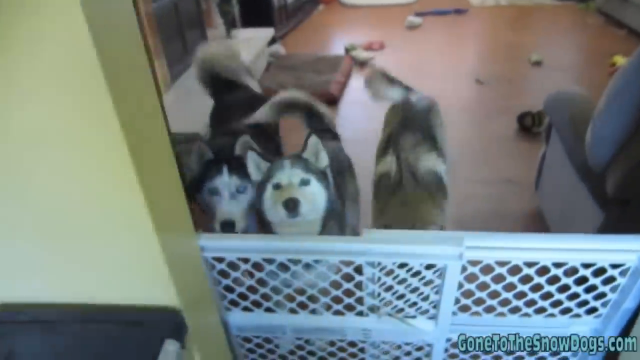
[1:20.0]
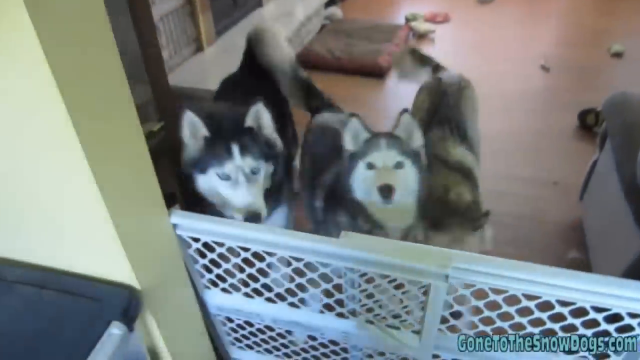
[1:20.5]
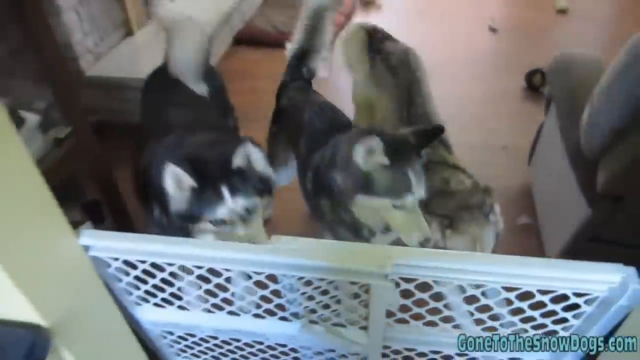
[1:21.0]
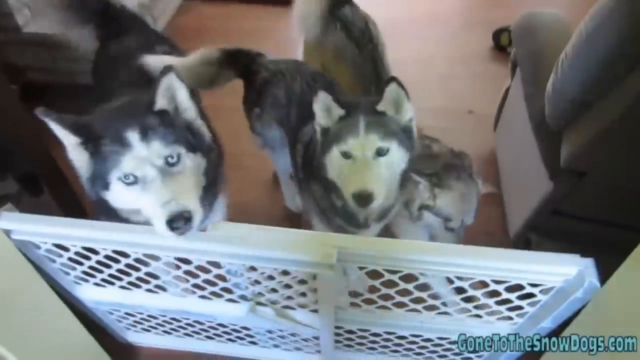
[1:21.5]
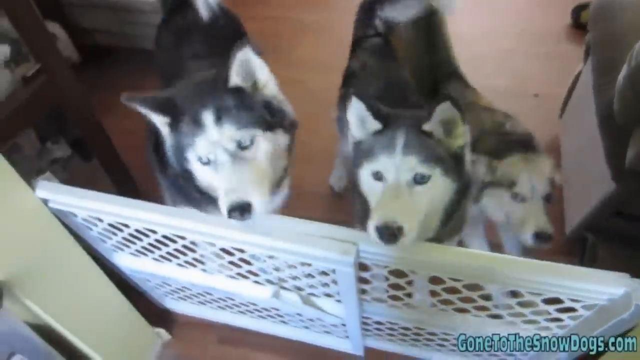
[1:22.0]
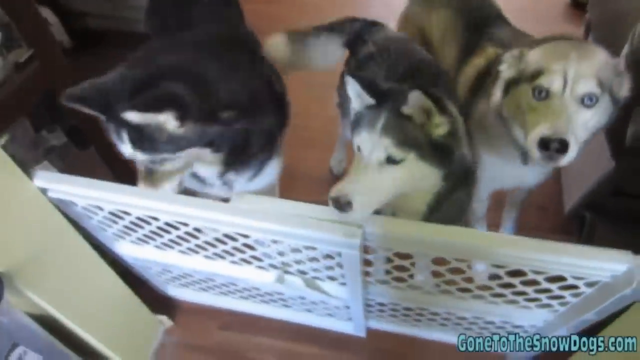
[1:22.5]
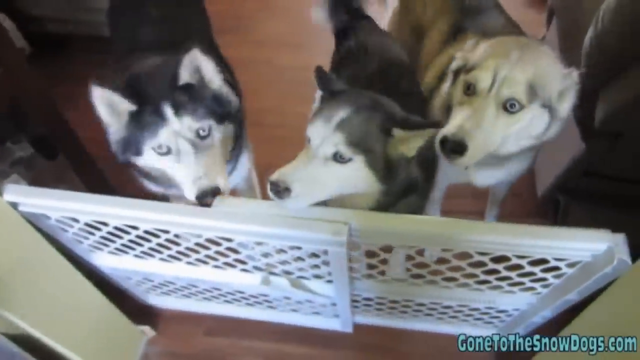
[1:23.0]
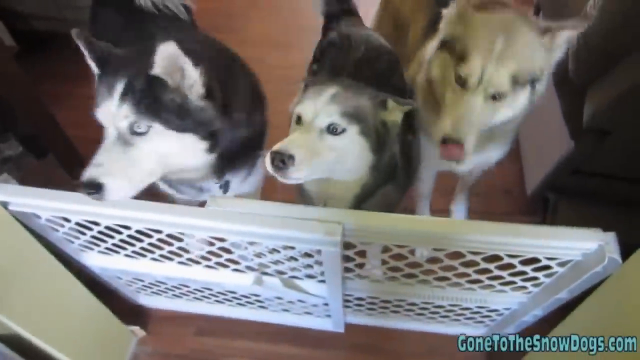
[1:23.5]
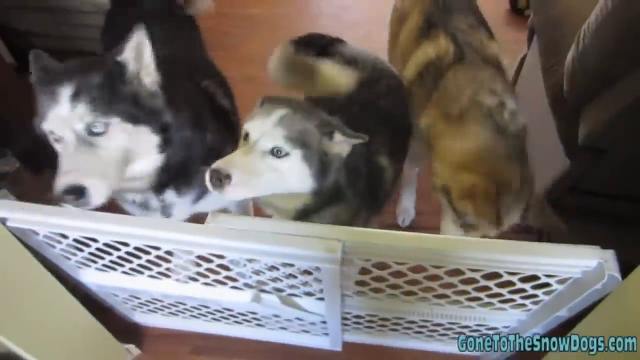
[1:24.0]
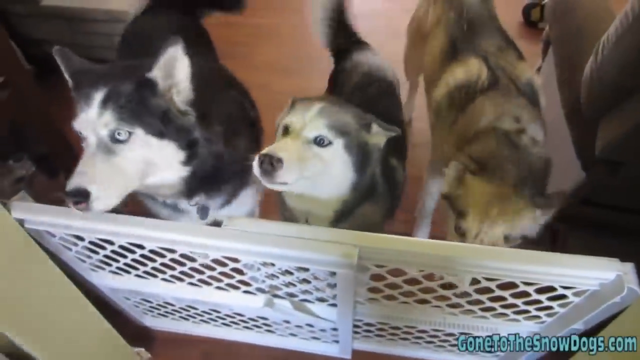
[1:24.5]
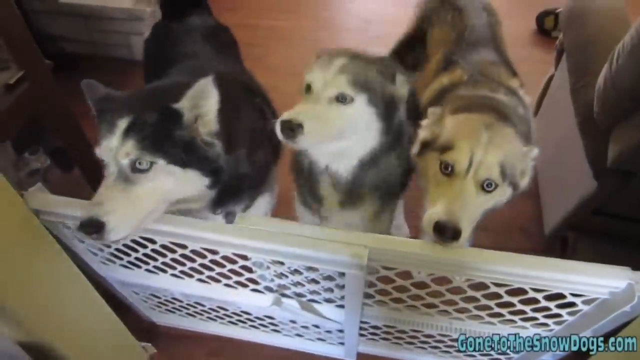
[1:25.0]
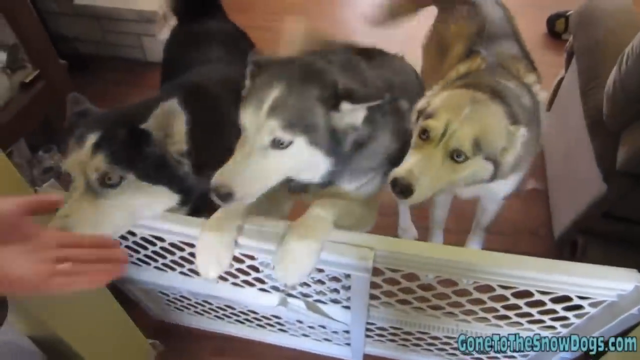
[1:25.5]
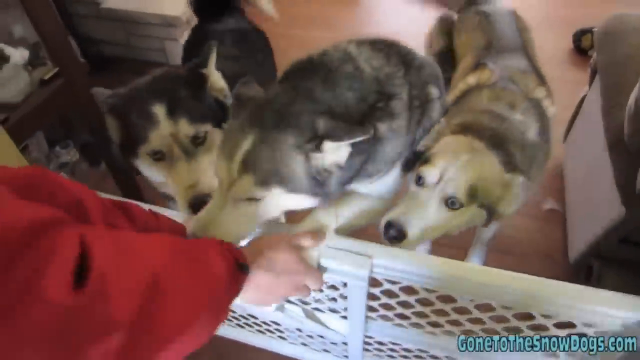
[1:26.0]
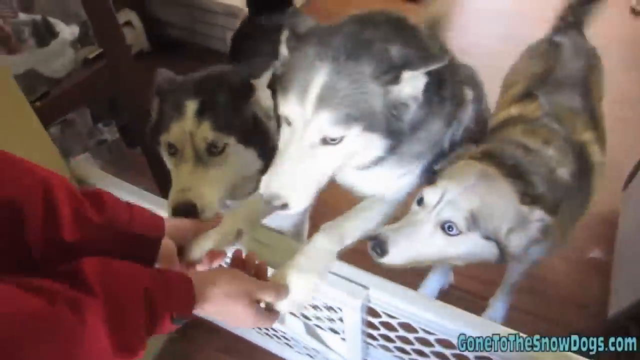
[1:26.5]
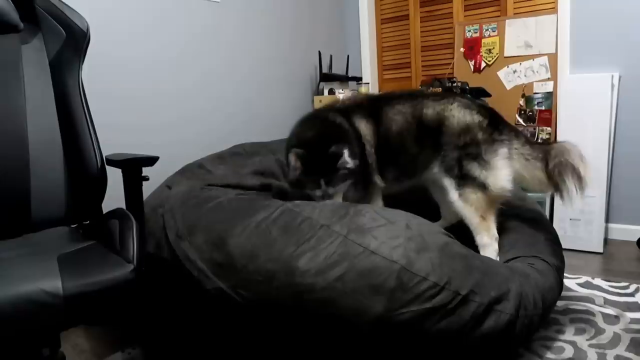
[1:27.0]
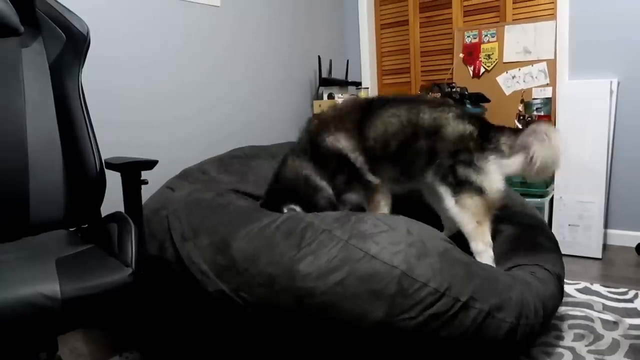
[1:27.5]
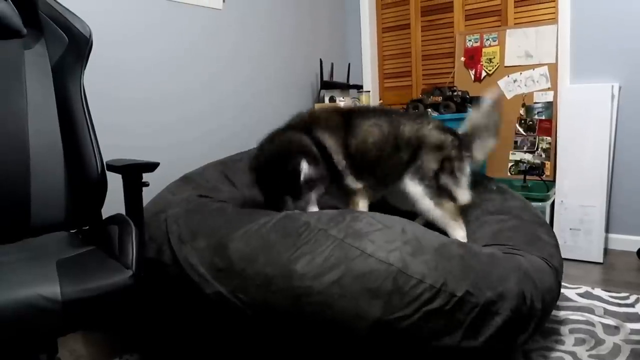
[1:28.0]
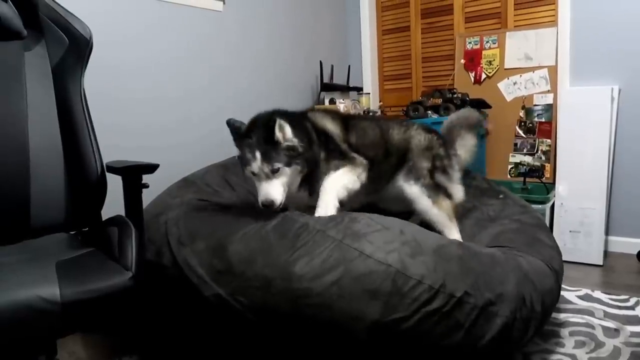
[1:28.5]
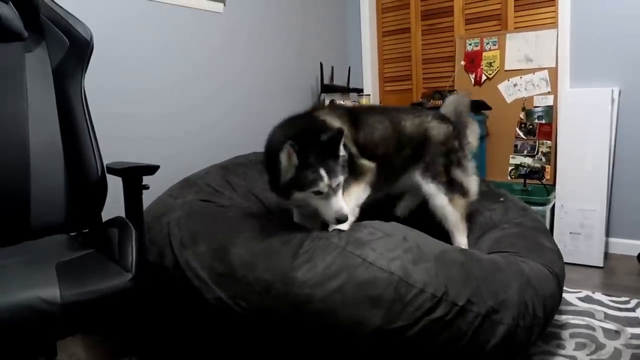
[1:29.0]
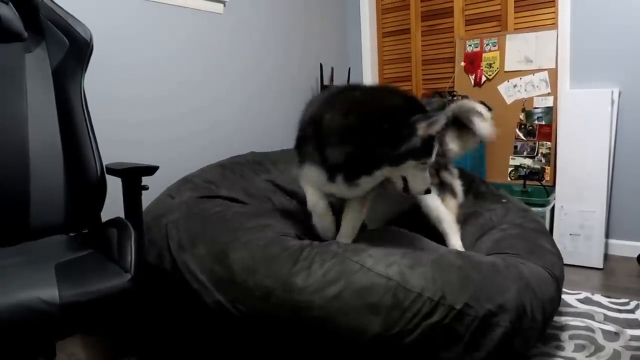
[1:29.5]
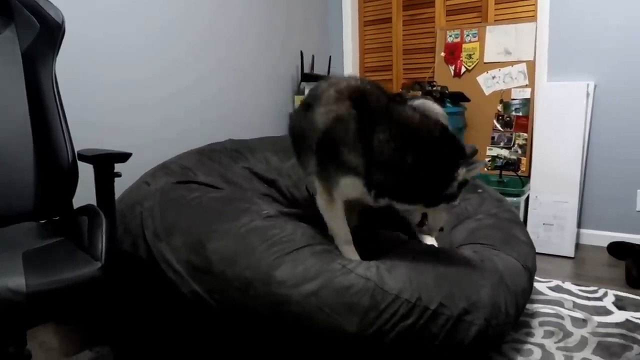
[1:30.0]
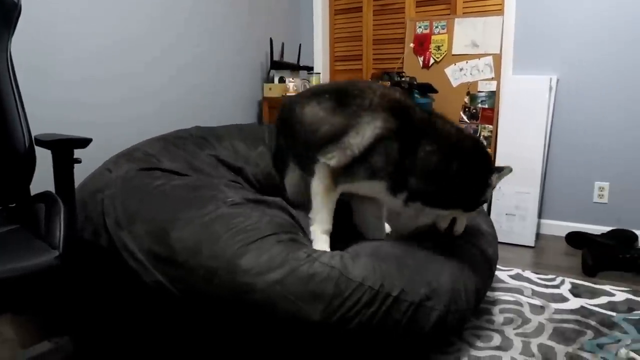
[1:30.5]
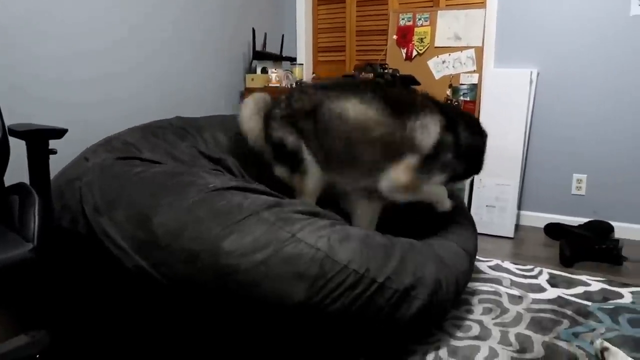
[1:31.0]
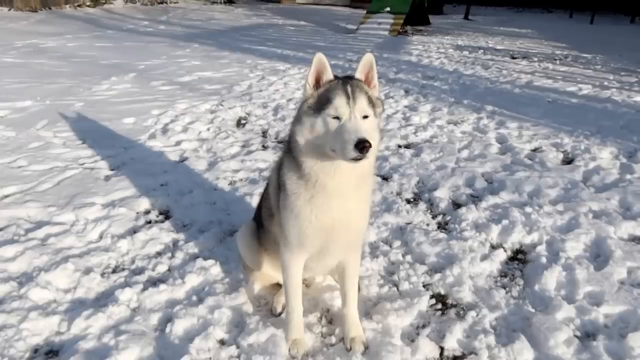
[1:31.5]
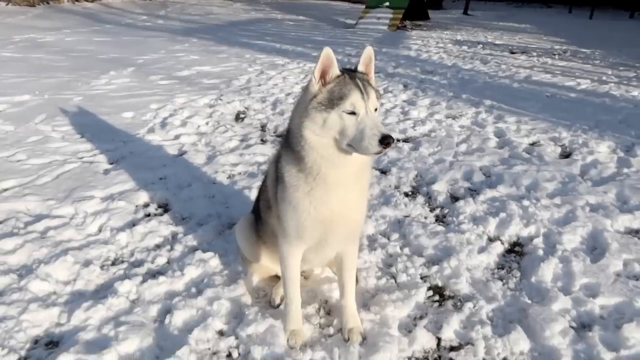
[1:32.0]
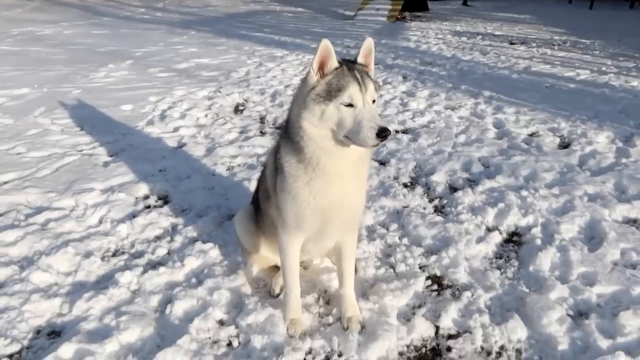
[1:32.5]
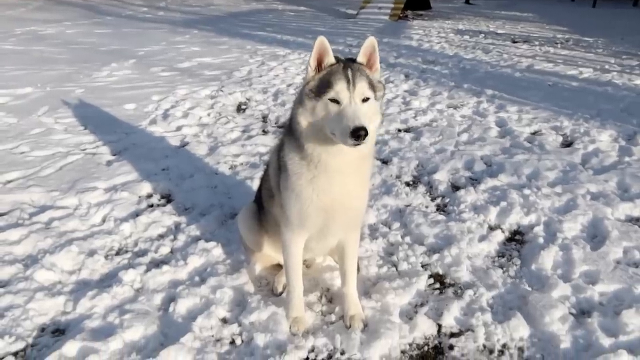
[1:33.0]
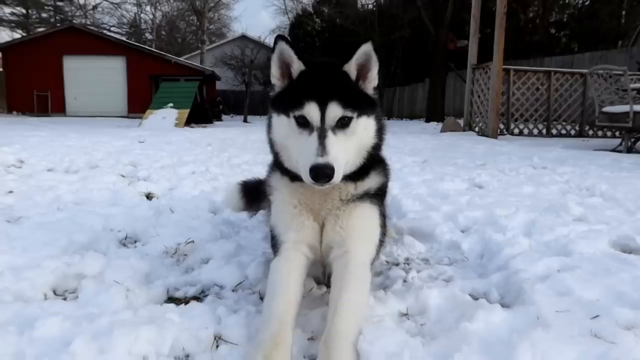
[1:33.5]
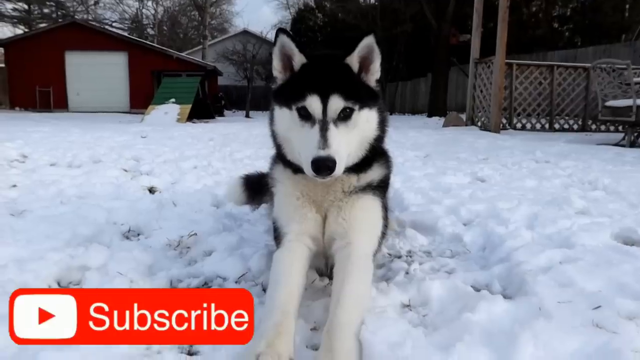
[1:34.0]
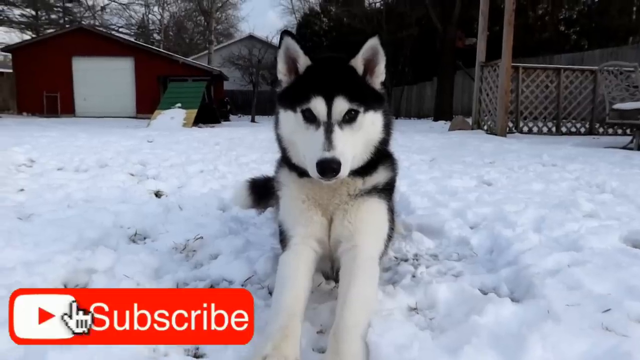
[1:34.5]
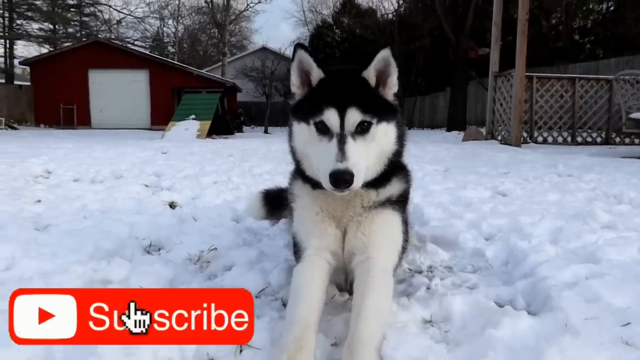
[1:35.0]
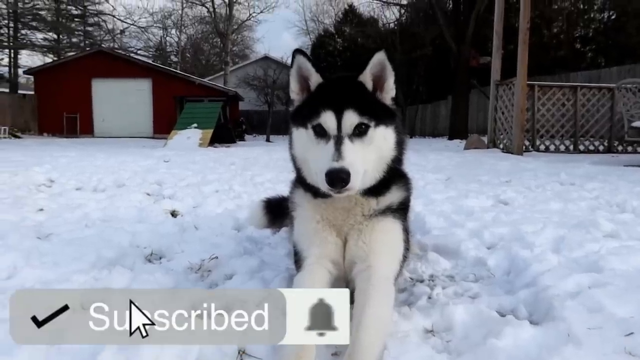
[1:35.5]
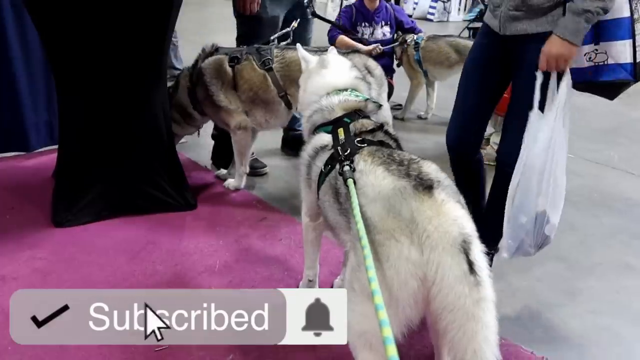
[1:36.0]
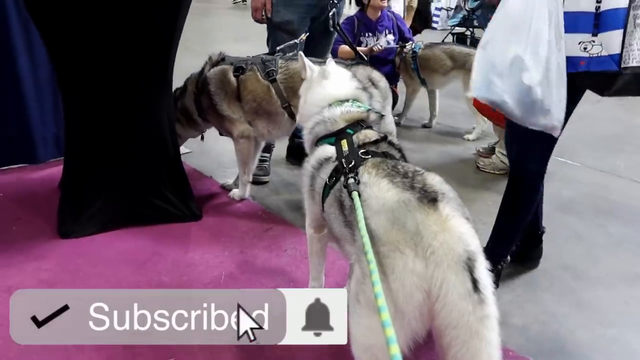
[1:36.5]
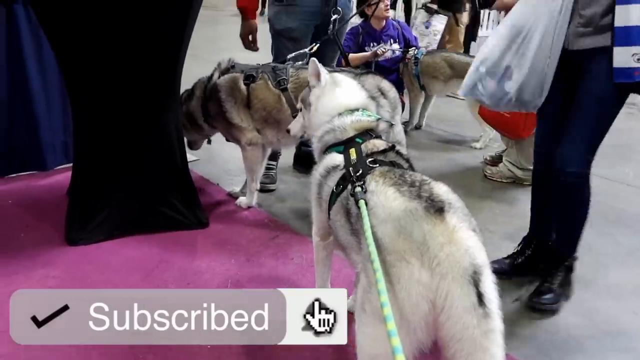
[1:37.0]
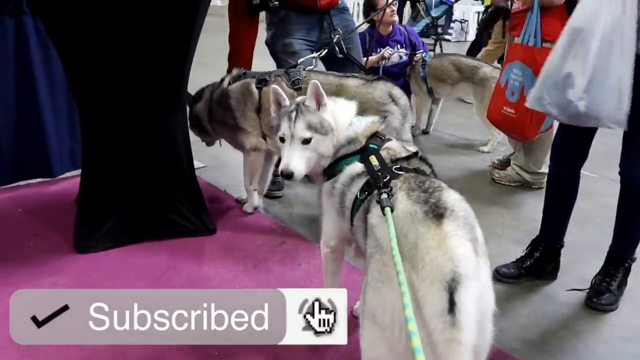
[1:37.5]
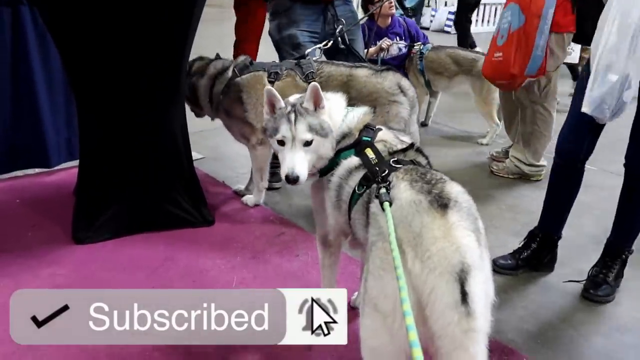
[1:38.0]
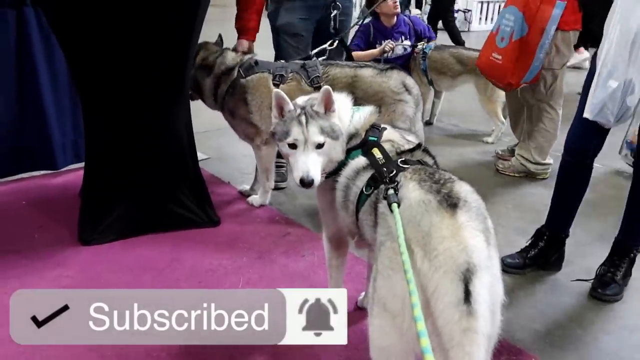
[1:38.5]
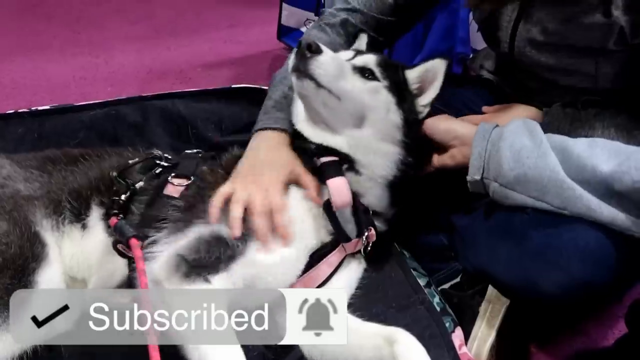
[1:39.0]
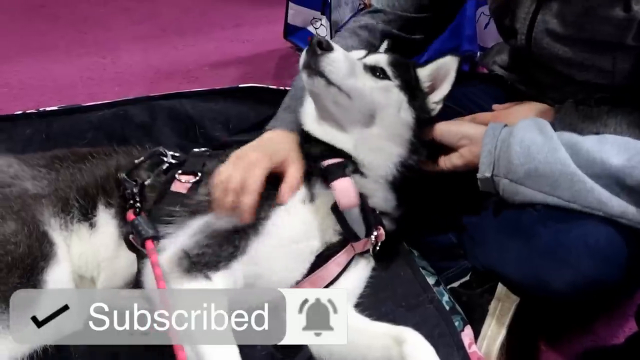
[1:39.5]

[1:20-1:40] Several views of the husky dogs follow. One seems to be at a competition of some sort in a small auditorium, with each dog on a leash sitting and walking around. Another shows a dog walking across a beanbag chair, and another shows a dog in a snowy backyard. A final scene shows the three dogs sitting behind a gate, interacting with the person behind the camera. At one point a YouTube icon appears with an animated subscribe button; a mouse clicks the button and it changes to say "subscribed." The dogs are very happy and very friendly throughout.